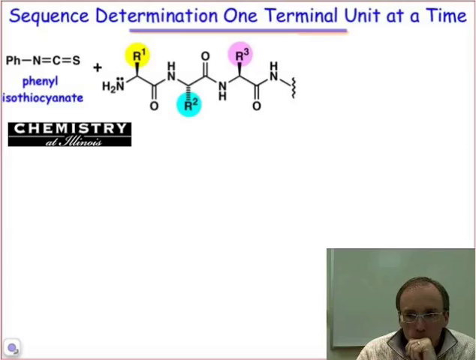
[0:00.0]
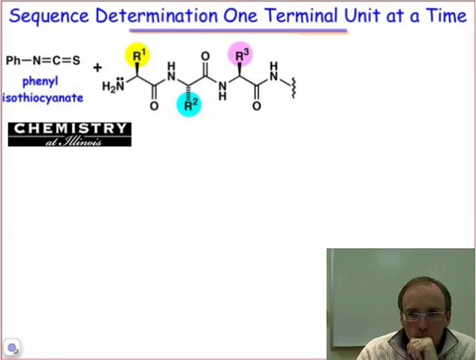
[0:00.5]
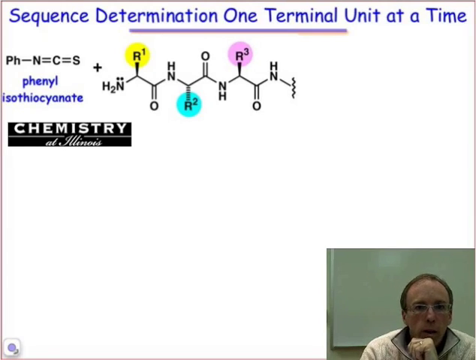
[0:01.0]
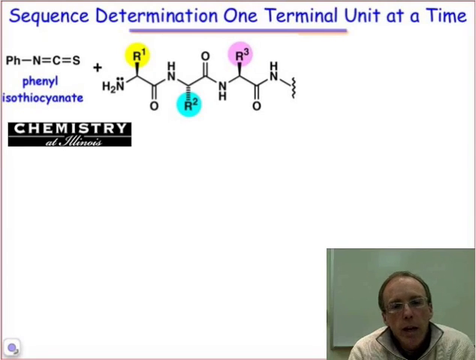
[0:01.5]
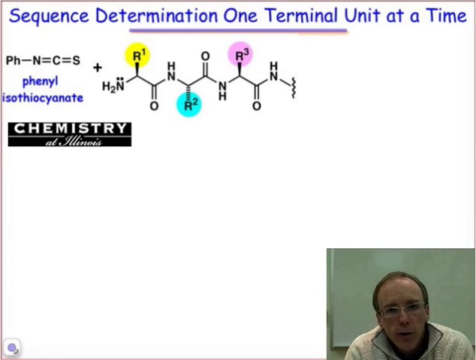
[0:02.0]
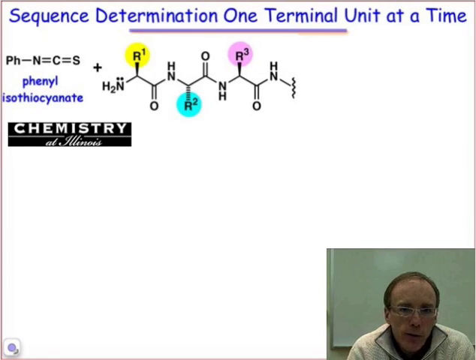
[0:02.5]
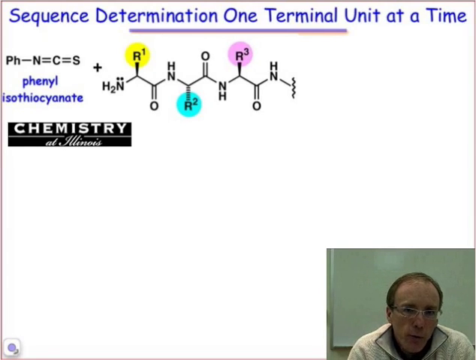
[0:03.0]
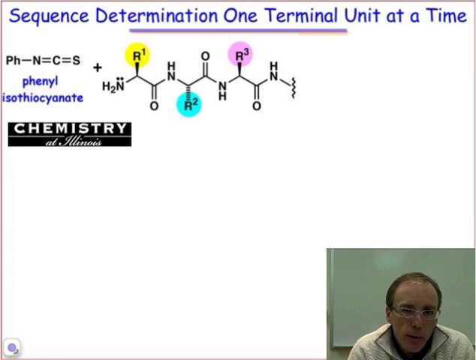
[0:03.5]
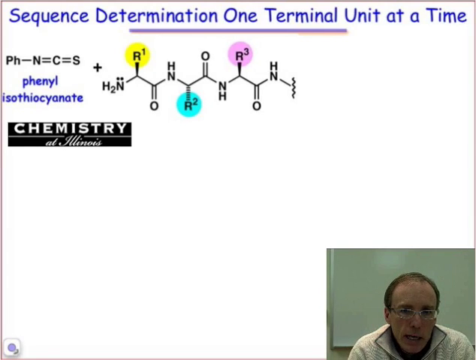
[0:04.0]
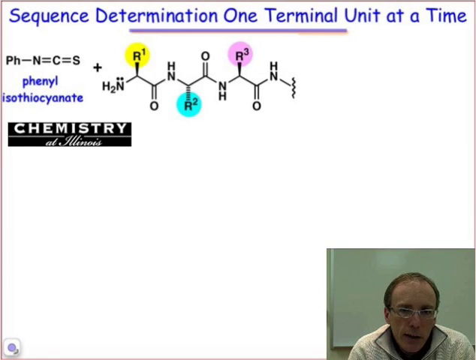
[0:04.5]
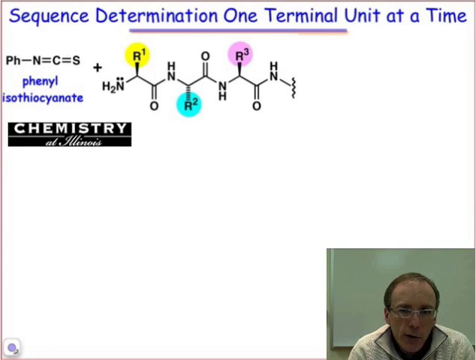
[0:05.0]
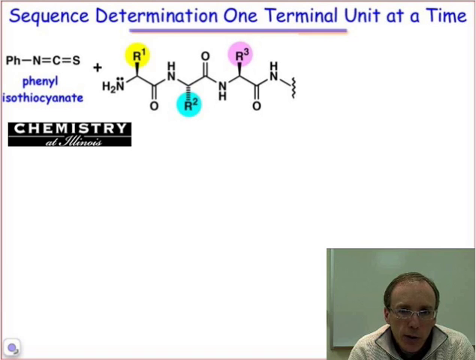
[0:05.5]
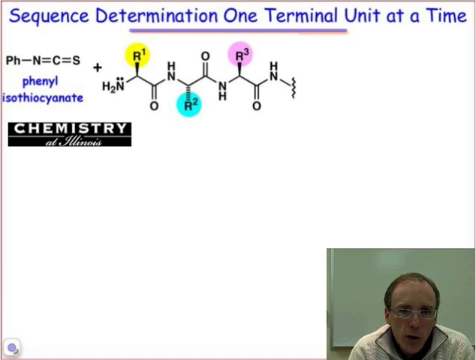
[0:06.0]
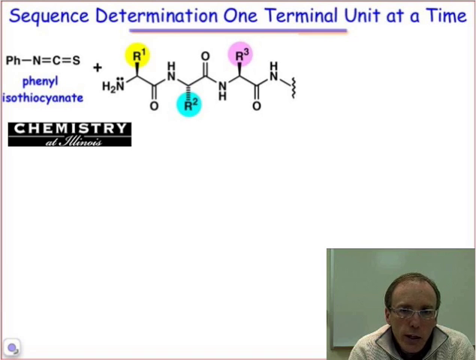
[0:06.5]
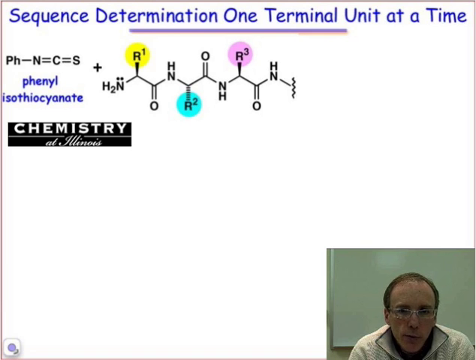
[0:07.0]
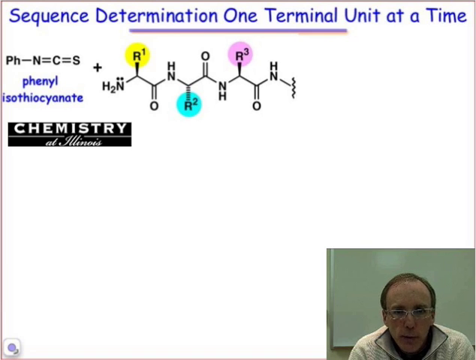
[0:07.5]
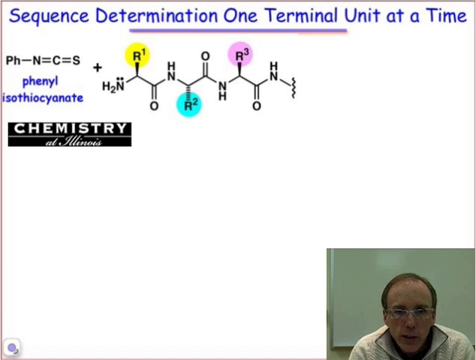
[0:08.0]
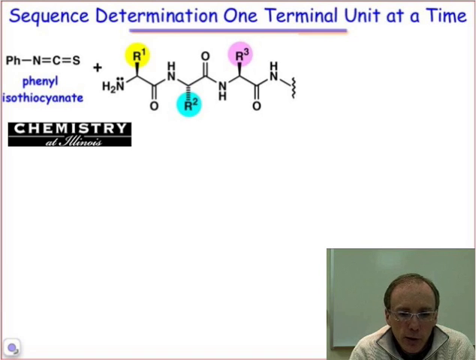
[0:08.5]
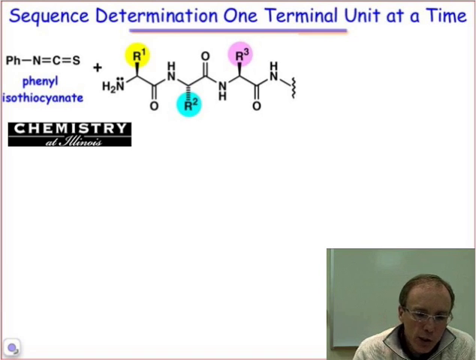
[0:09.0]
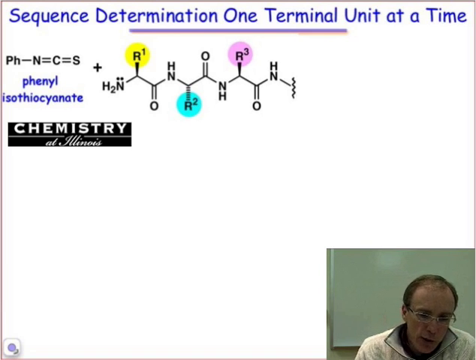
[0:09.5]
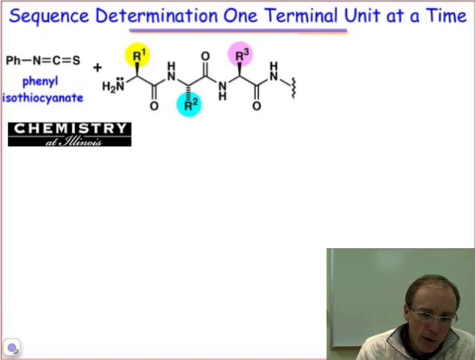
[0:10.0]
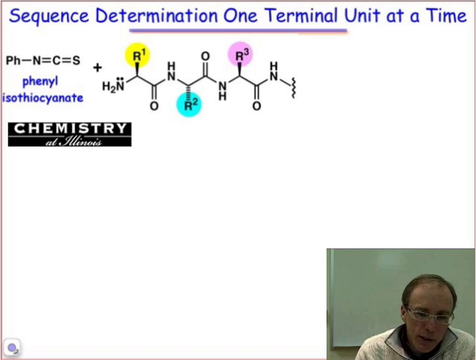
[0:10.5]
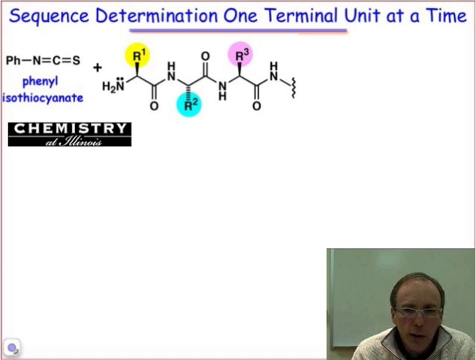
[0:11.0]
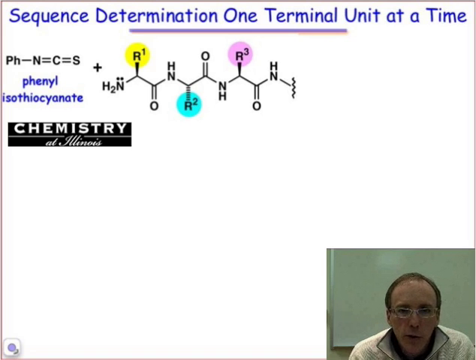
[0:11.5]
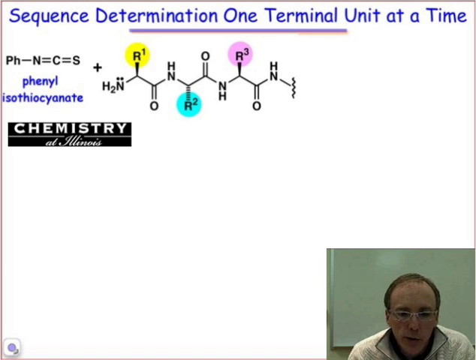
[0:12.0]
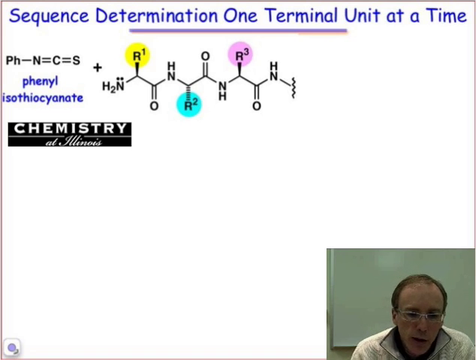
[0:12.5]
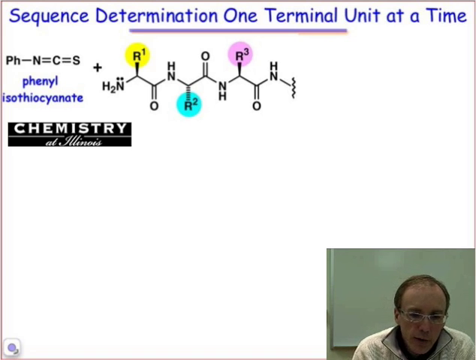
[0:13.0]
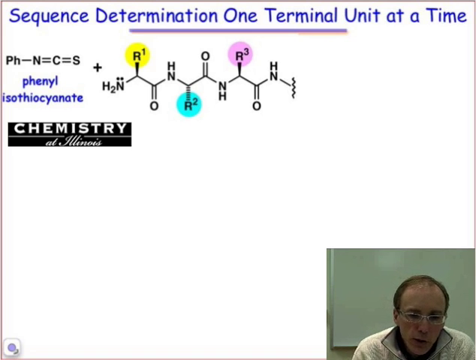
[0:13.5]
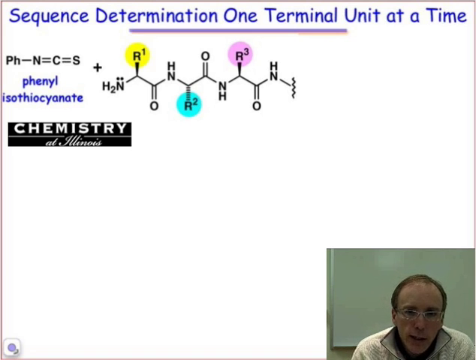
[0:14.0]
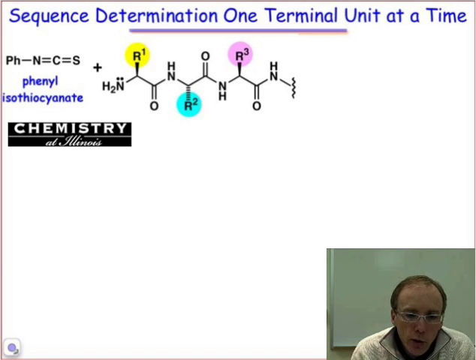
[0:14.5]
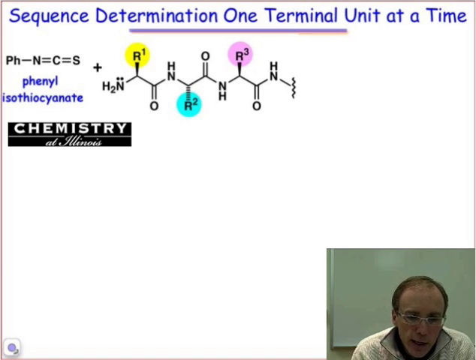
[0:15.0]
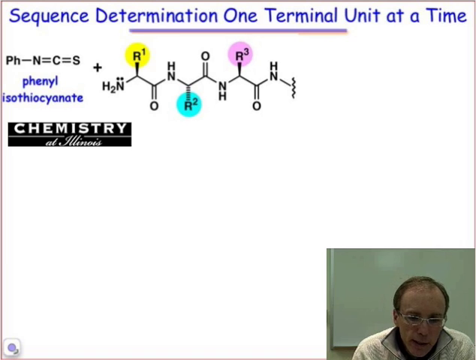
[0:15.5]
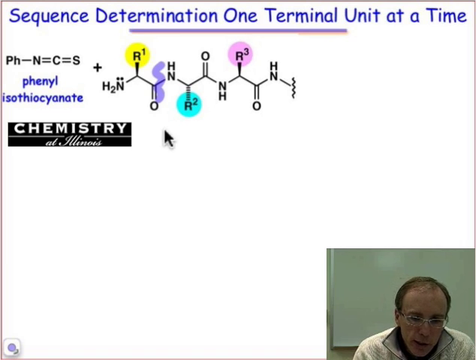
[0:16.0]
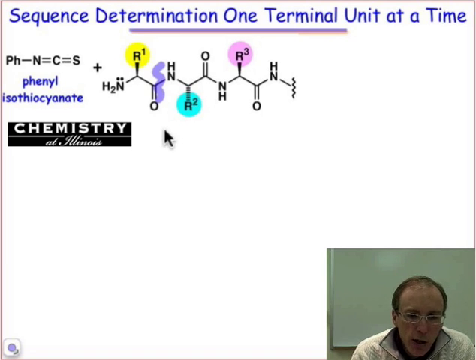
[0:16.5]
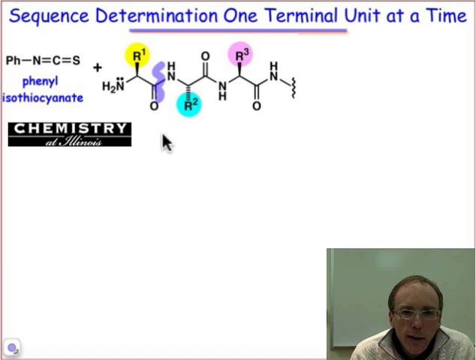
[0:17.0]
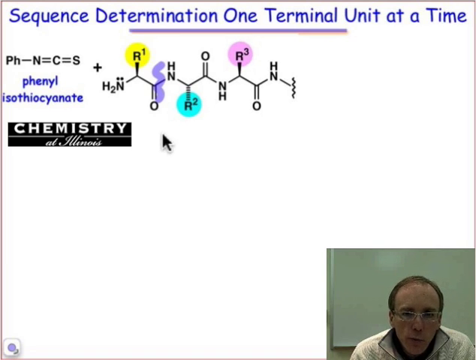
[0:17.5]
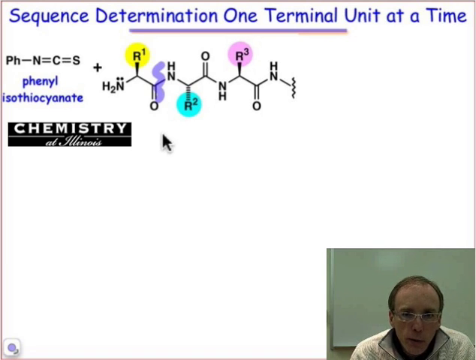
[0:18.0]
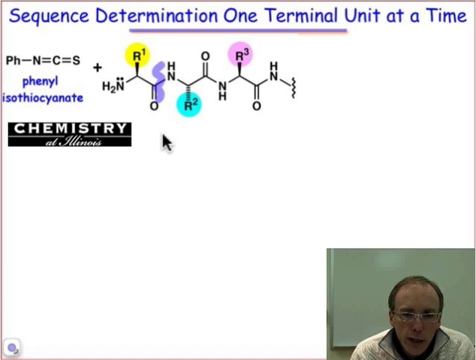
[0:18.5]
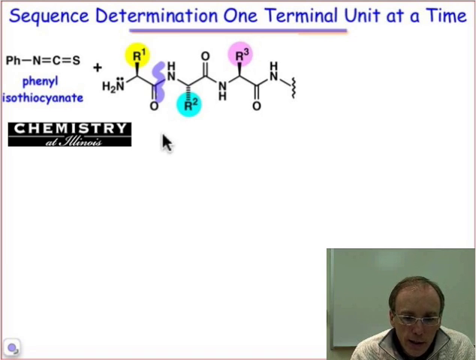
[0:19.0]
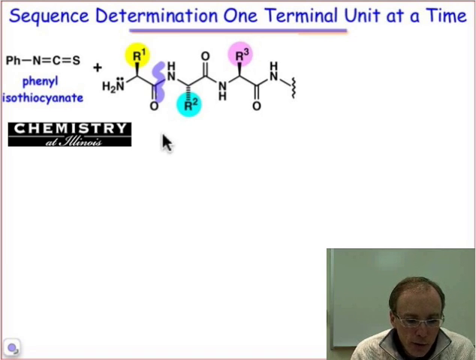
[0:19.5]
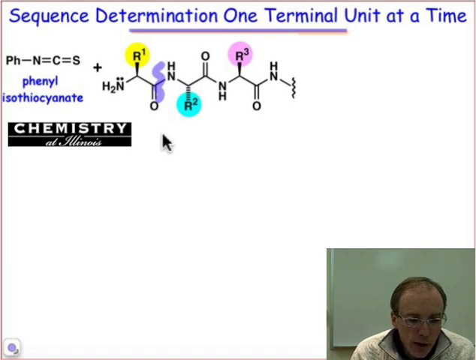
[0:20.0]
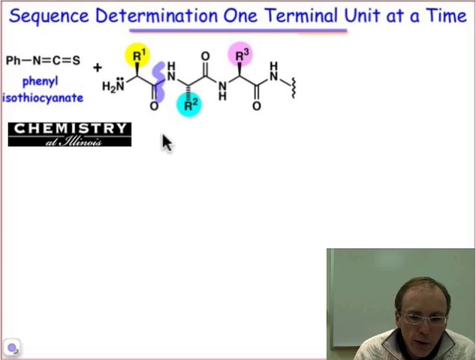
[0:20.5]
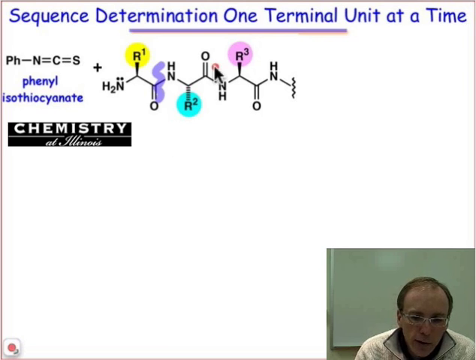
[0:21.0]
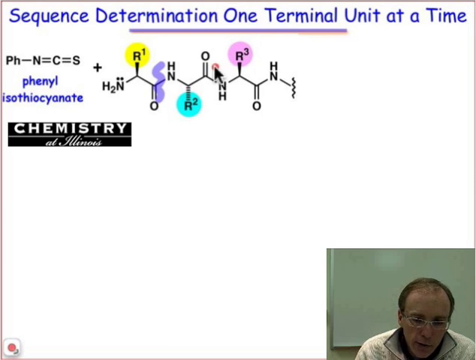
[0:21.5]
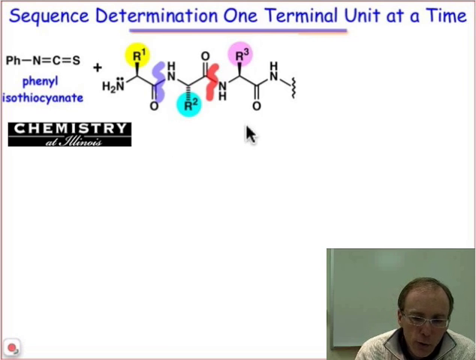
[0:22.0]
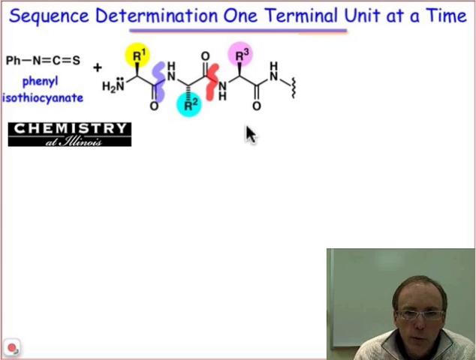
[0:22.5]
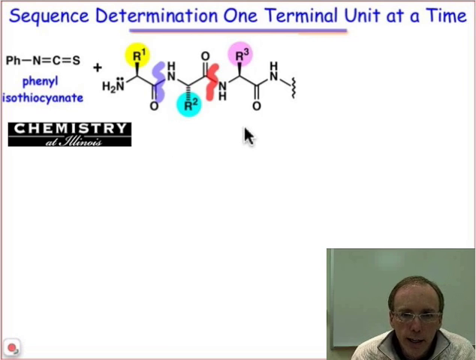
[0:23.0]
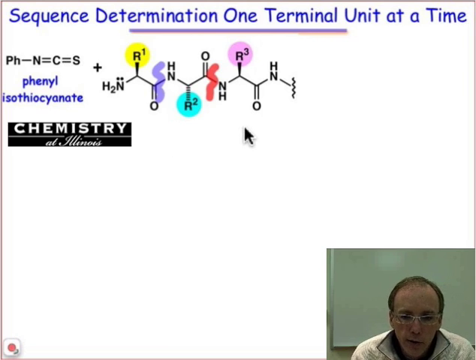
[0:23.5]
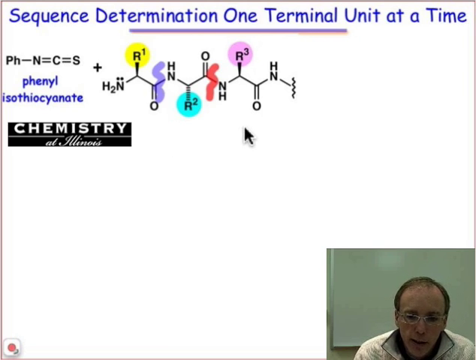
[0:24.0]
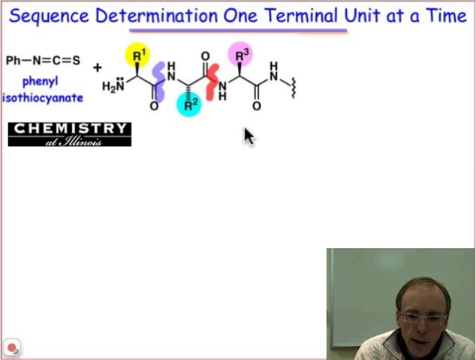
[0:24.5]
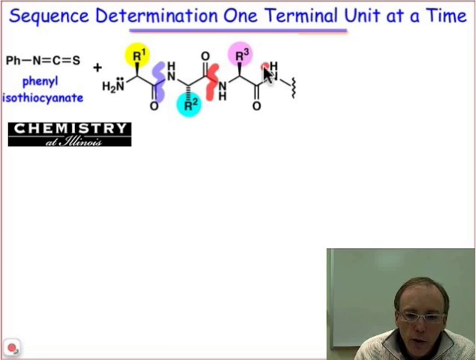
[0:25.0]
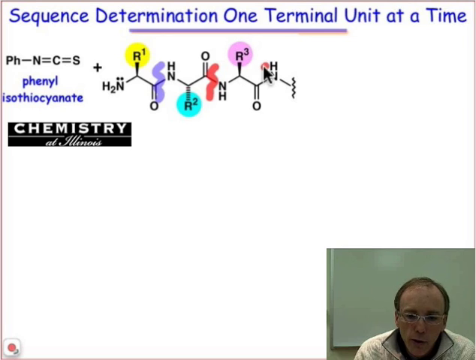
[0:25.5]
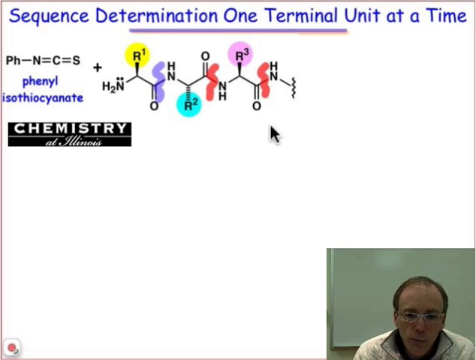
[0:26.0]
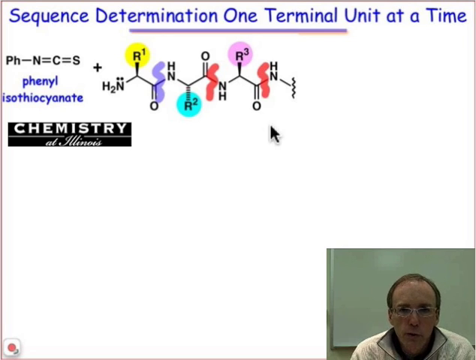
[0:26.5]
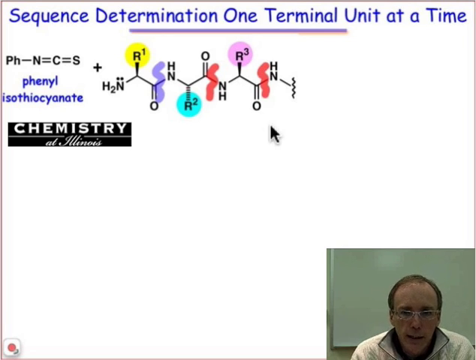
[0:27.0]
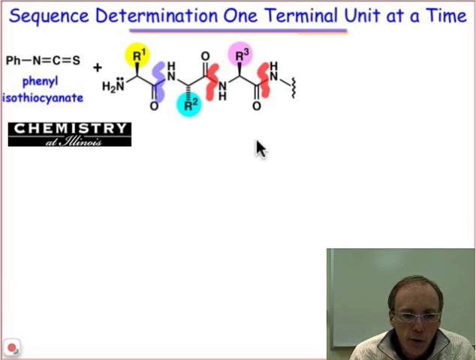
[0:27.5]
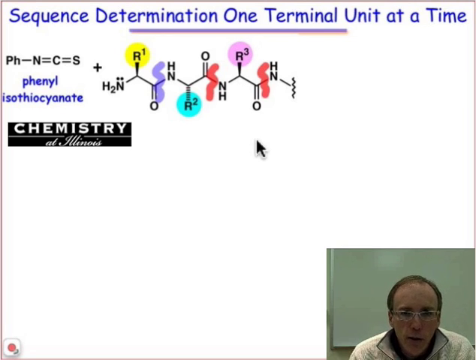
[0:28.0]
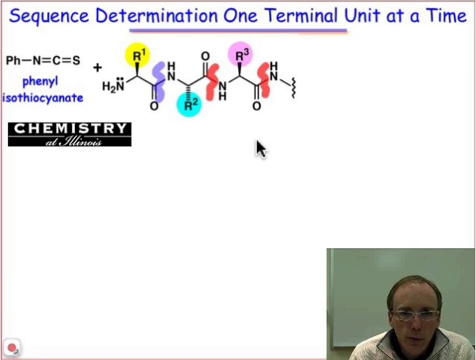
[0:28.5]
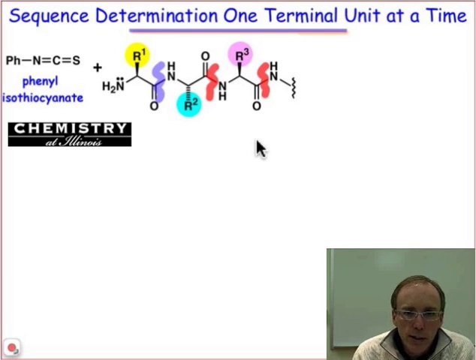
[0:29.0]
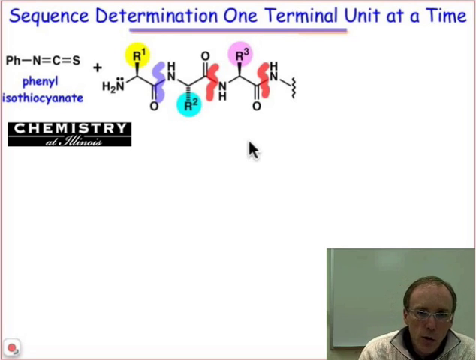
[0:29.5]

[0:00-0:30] A computer screen shows a sequence determination for a chain of phenyl isothiocyanate. Across the top is cobalt blue text that looks somewhat handwritten, reading from left to right "sequence determination one terminal unit at a time." Beneath it in the center, a purple line runs from left to right. Directly beneath that is black lettering that says "PH-N=C=S," followed by a chain of phenyl isothiocyanate. The chain begins with H2N and goes up to an R with a small 1 over it inside a yellow circle. It then drops down to an O and goes up to an HN, then down to an R with a tiny 2 next to it, circled inside a blue dot. Next it goes up to an O, down to an NH, and up to an R with a tiny 3 inside a pink circle, then down to an O and up to an HN. Directly beneath that, on the left side, is a black rectangle with white text that says "chemistry at Illinois." At the bottom of the screen is a middle-aged Caucasian man with light brown thinning hair, wearing glasses and a pullover sweater. He looks directly at the camera and talks as he shows the formula for the phenyl isothiocyanate.